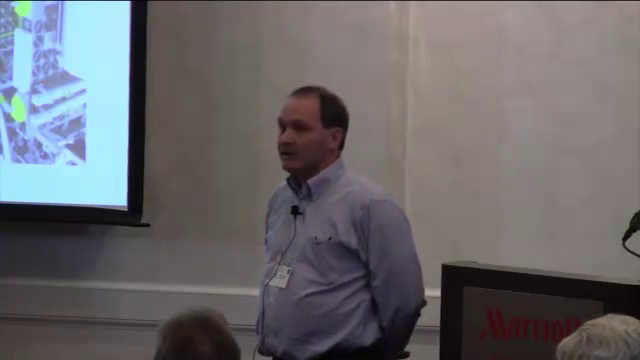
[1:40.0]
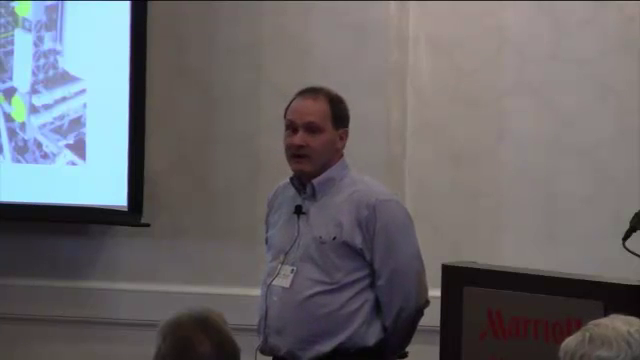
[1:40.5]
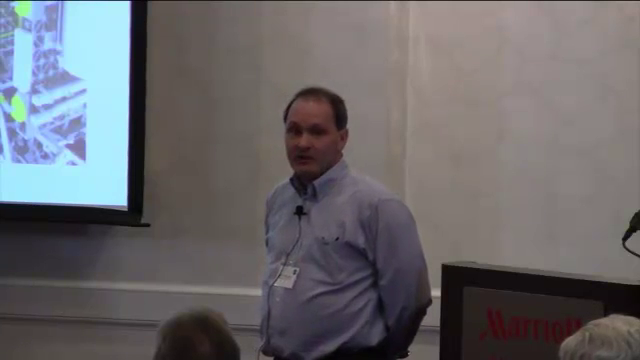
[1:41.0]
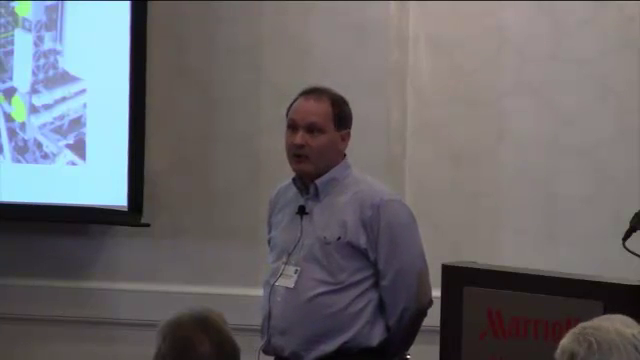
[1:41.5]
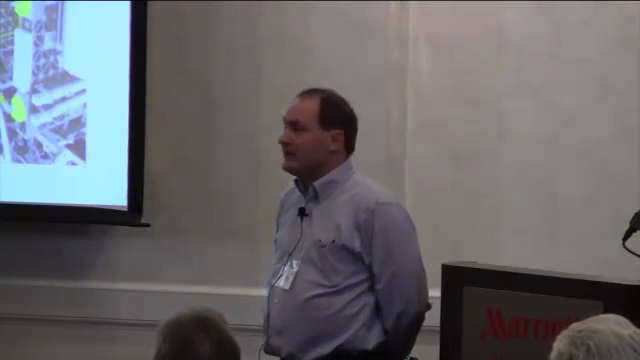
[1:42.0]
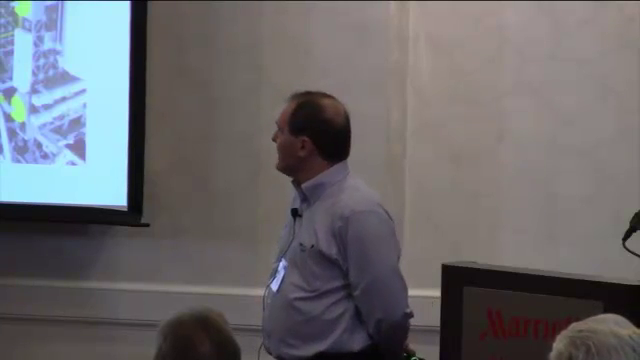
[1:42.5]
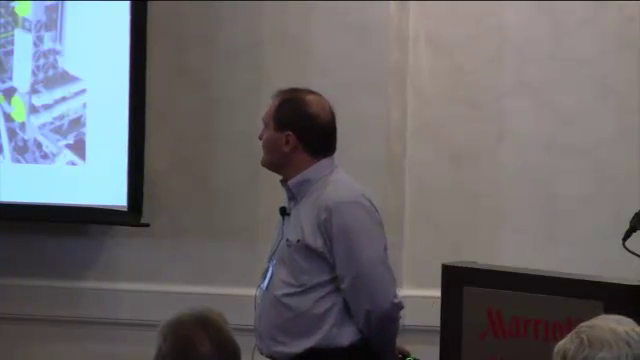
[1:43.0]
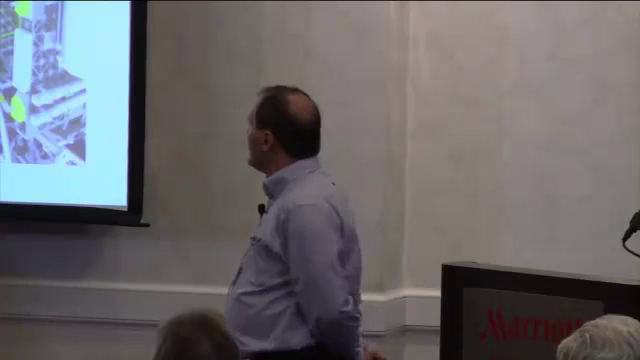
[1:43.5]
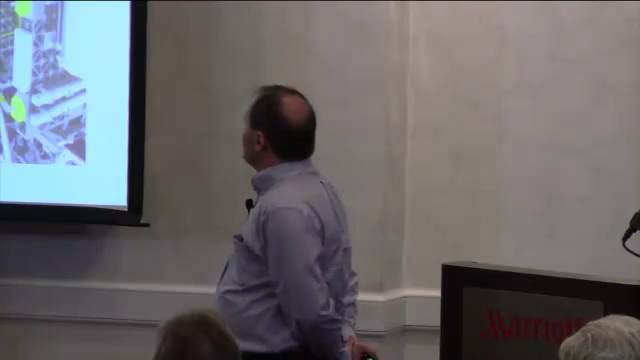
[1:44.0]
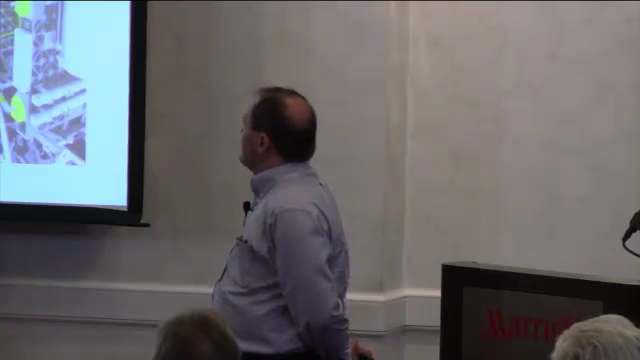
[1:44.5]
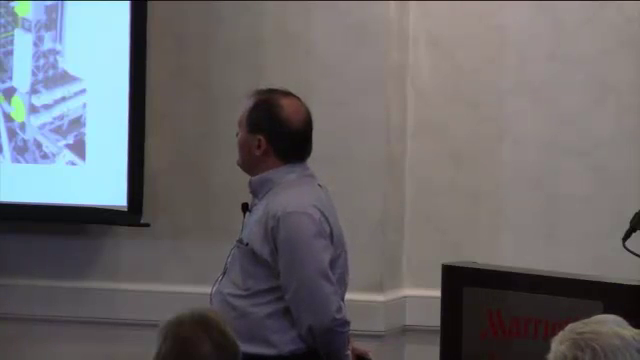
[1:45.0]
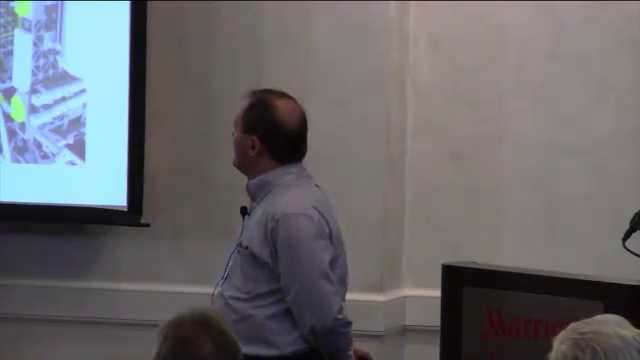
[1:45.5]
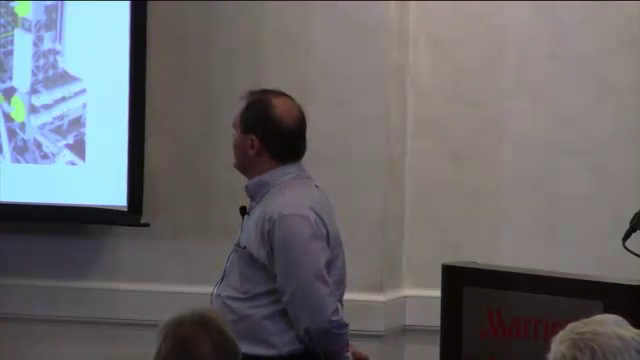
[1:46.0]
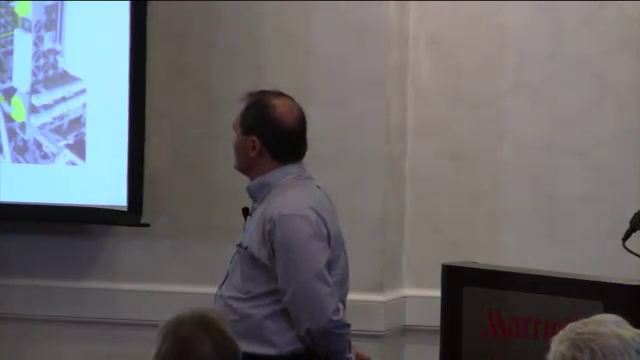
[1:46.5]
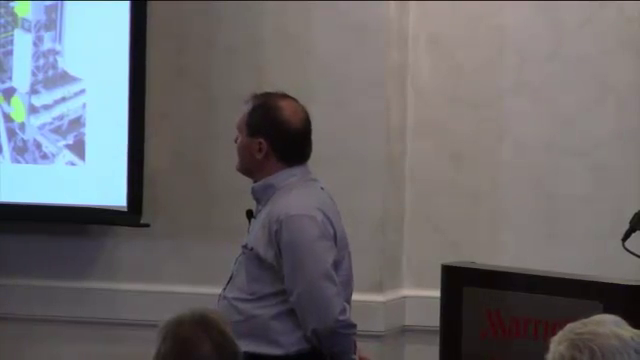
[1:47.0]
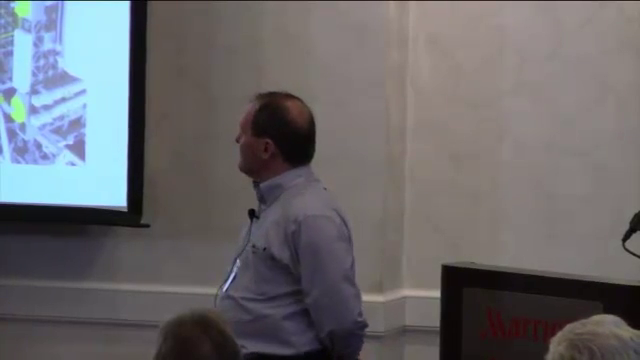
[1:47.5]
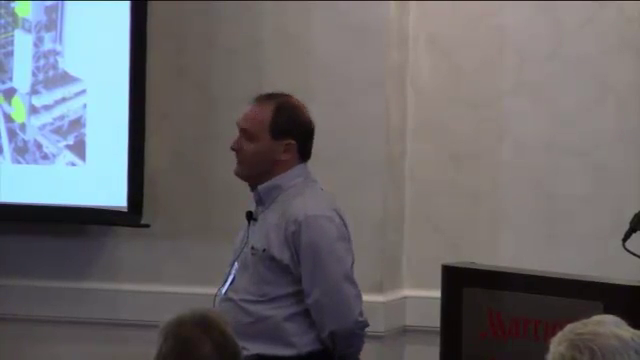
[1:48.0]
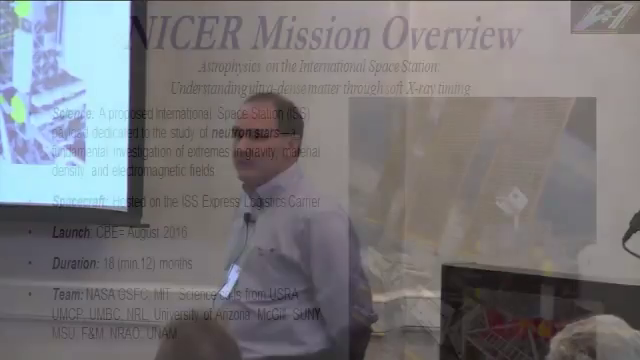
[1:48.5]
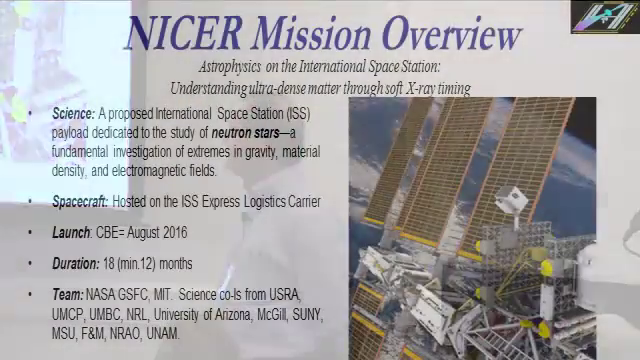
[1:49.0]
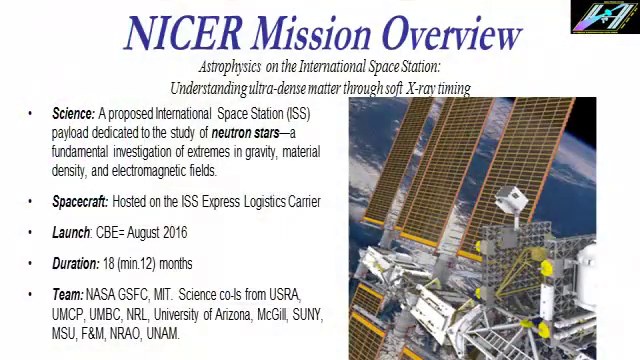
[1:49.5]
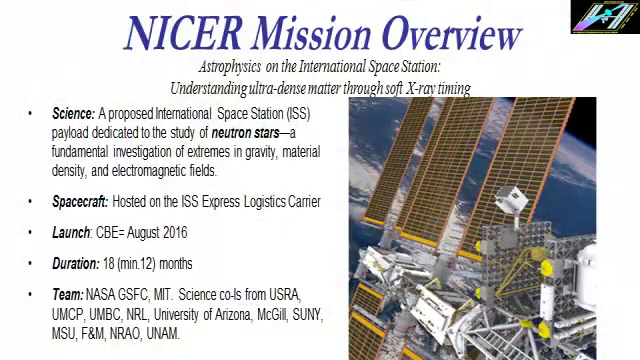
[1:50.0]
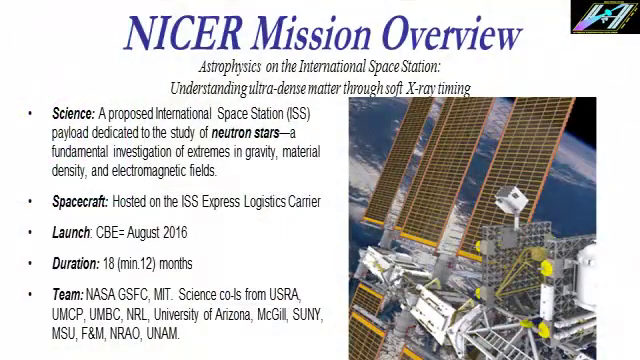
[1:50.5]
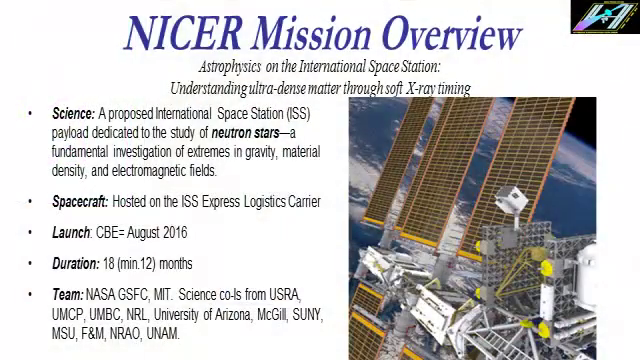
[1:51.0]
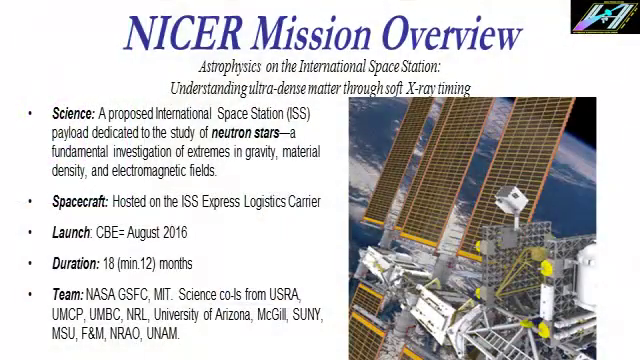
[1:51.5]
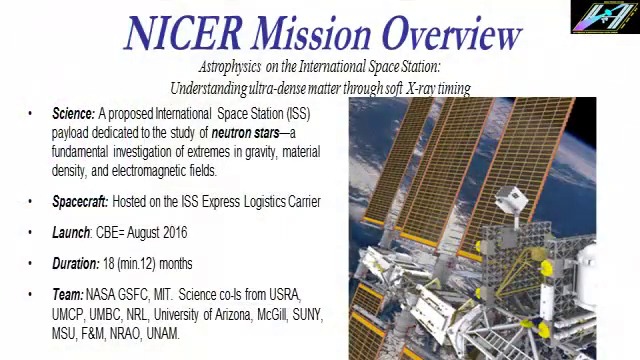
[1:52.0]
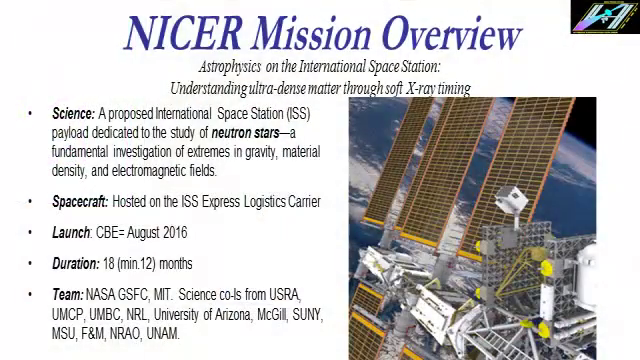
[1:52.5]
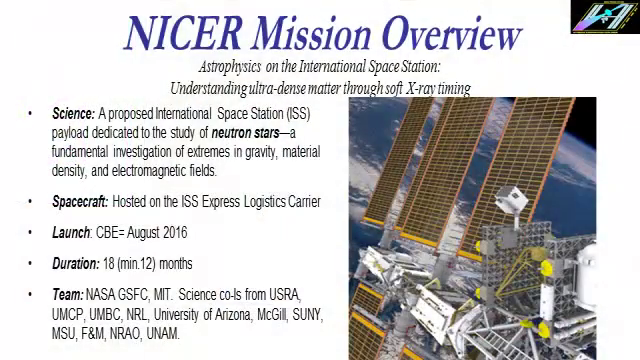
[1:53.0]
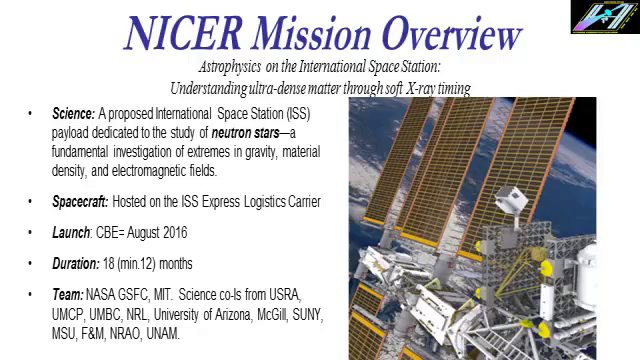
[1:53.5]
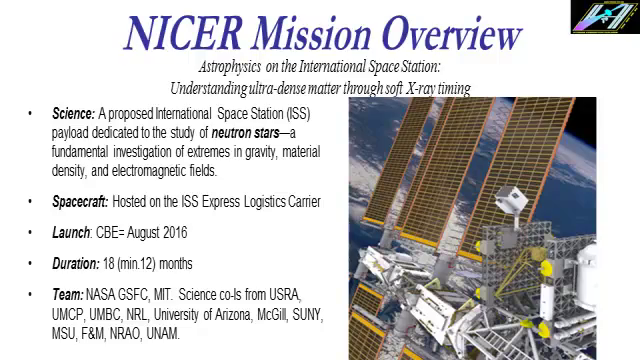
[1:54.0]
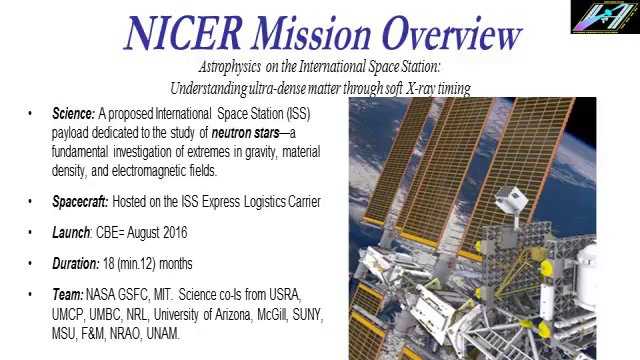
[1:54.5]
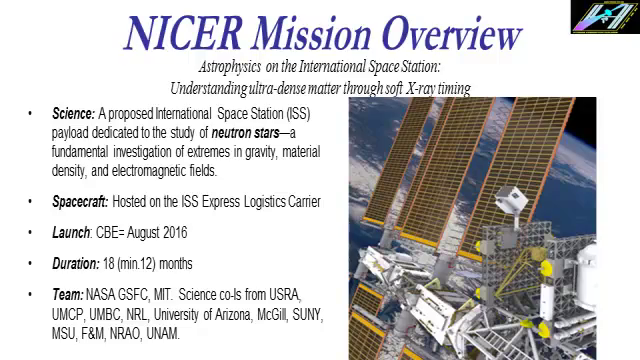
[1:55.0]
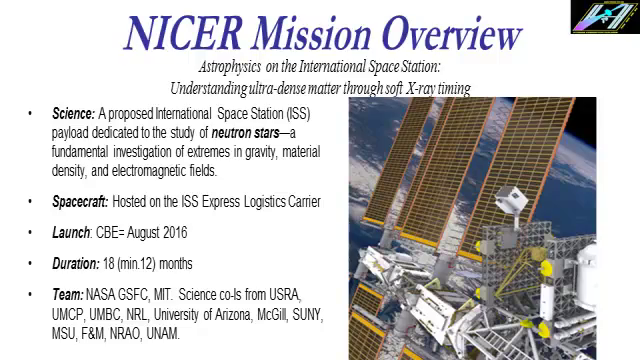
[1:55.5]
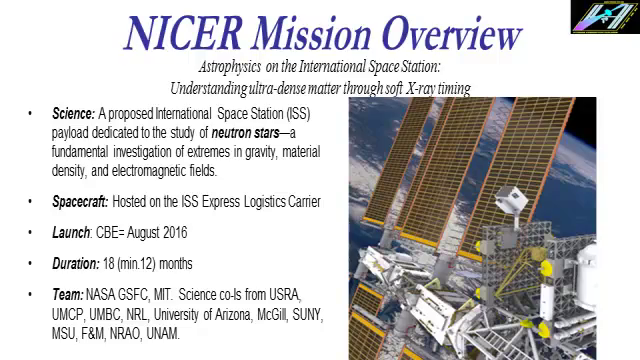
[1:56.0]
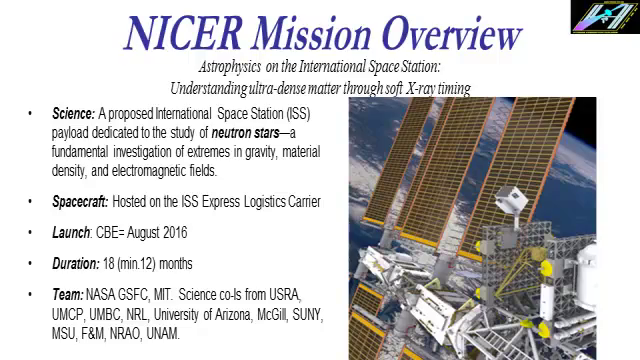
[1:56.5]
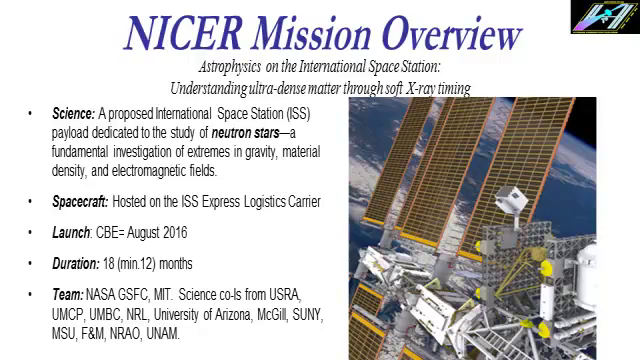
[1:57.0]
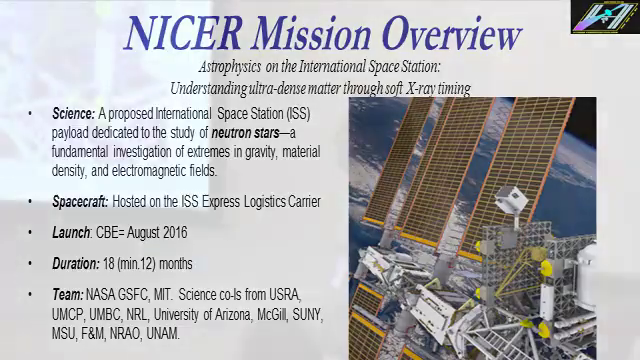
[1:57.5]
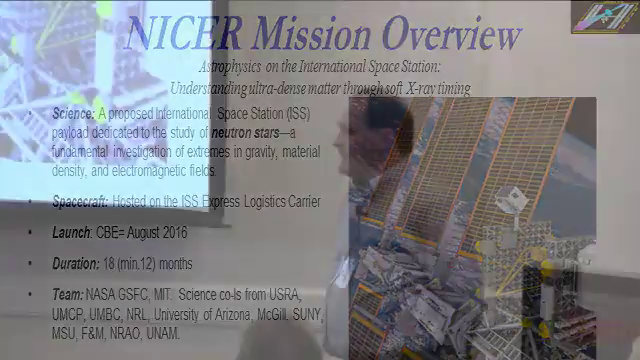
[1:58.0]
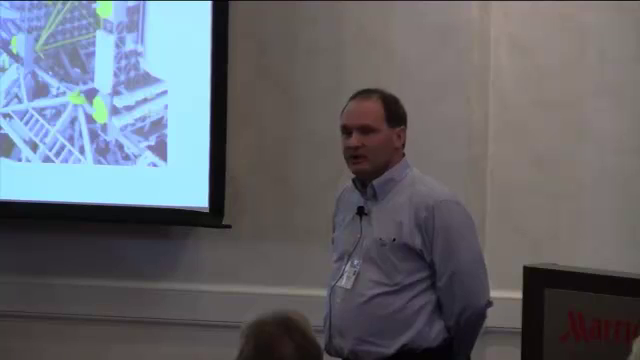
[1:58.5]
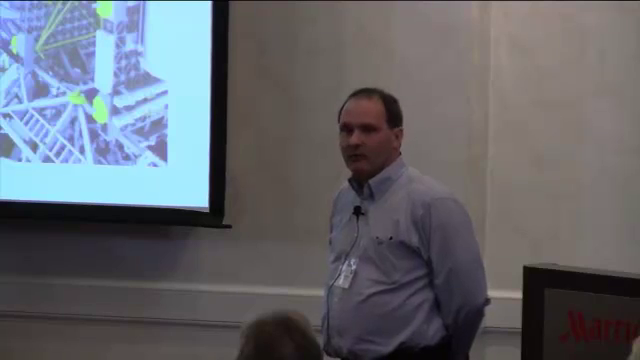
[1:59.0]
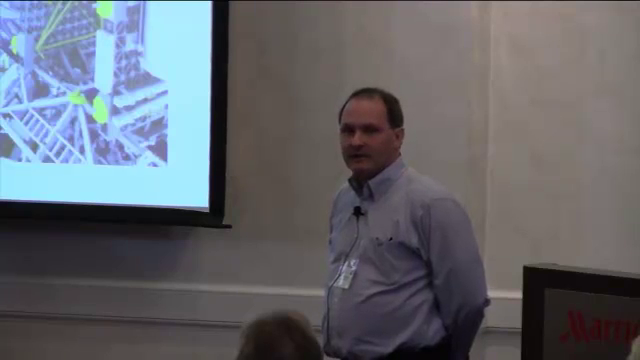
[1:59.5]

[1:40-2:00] The man continues to speak, standing to the viewer's right of the podium with his left arm behind his back. A microphone is clipped to his chest between his second and third buttons, and a name badge rests on his belly. He keeps speaking to his audience, frequently turning toward the screen to his right. The view returns to a page titled "NICER Mission Overview" in blue at the very top, with smaller black text beneath reading "astrophysics on the International Space Station. Understanding ultra-dense matter through soft x-ray timing." At the bottom right is an image of some space equipment with four brown panels on top that have grids on them; in the background is what seems to be earth, blue with white clouds. On the left are five bullet points: the first titled "Science" in bold black text, then "Spacecraft," "Launch," "Duration," and lastly "Team."